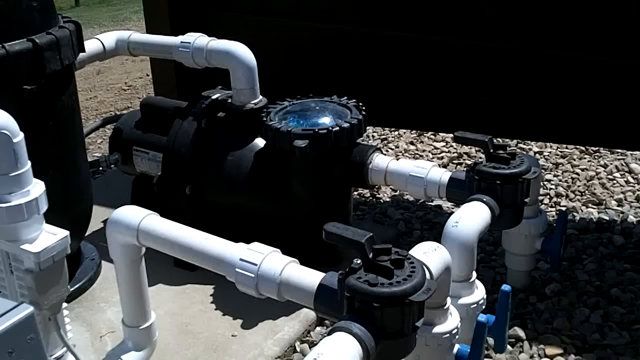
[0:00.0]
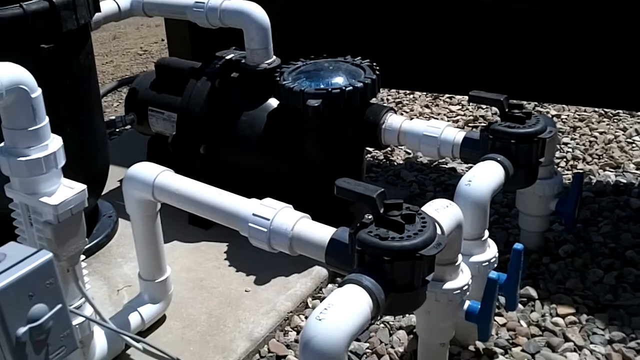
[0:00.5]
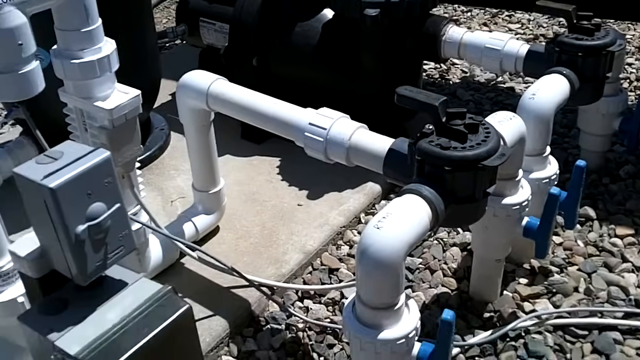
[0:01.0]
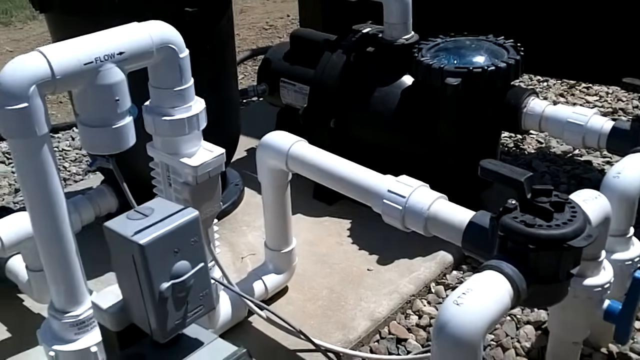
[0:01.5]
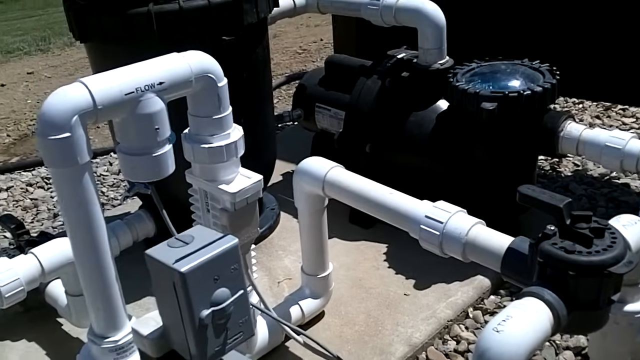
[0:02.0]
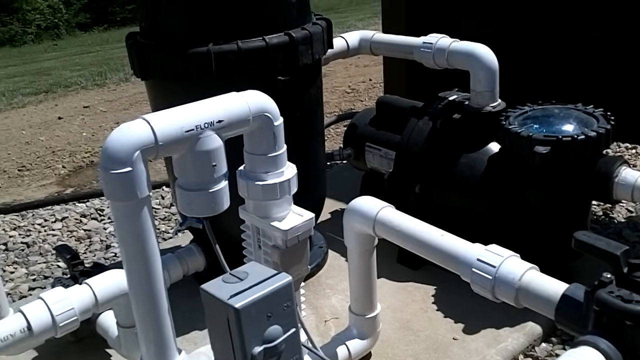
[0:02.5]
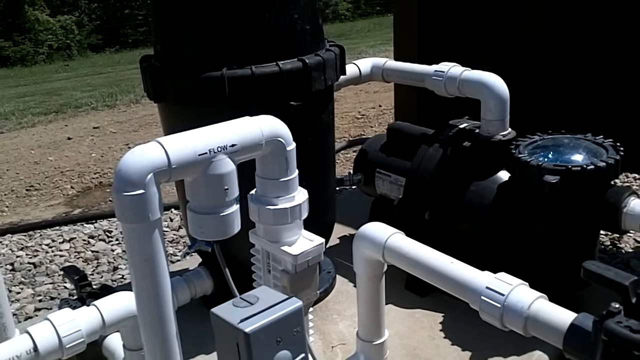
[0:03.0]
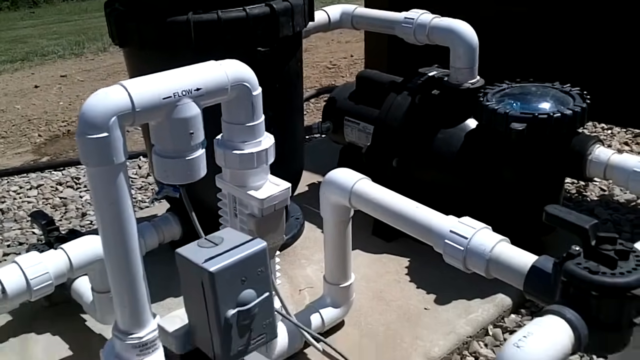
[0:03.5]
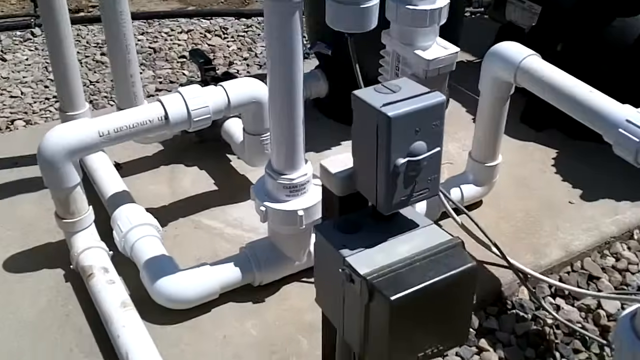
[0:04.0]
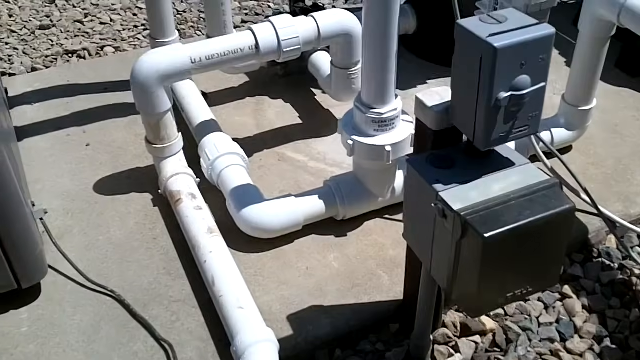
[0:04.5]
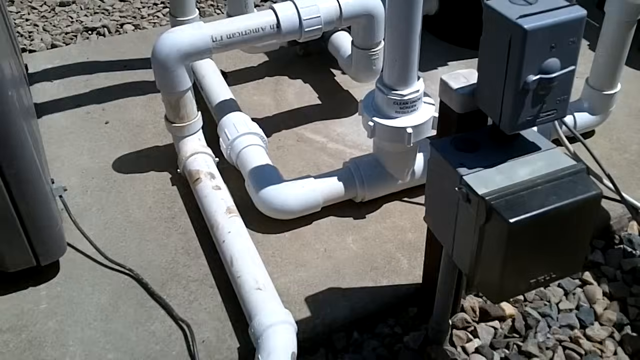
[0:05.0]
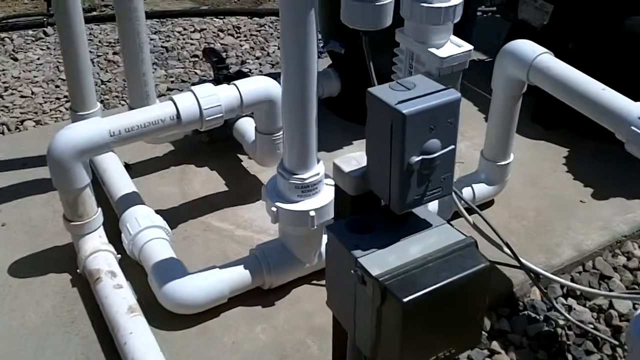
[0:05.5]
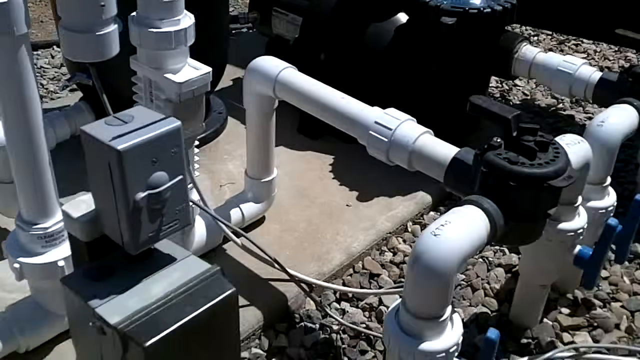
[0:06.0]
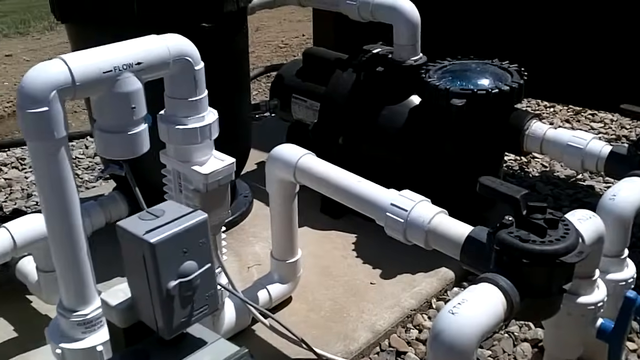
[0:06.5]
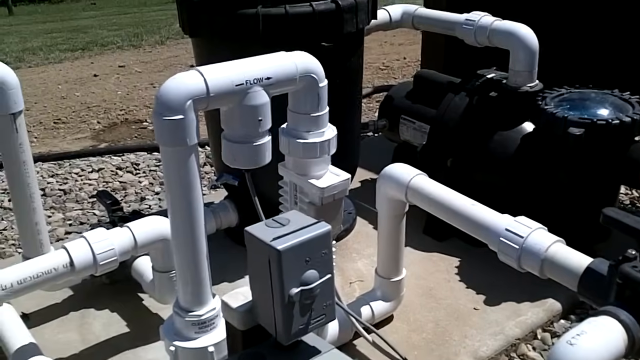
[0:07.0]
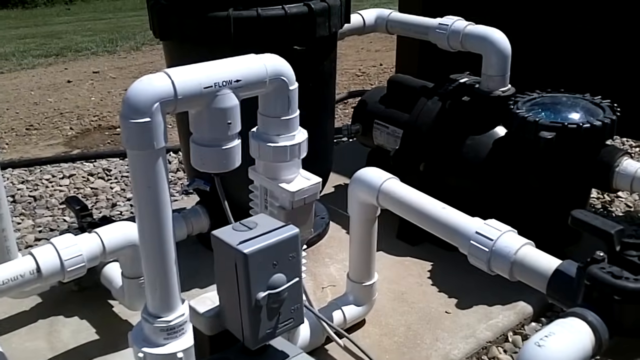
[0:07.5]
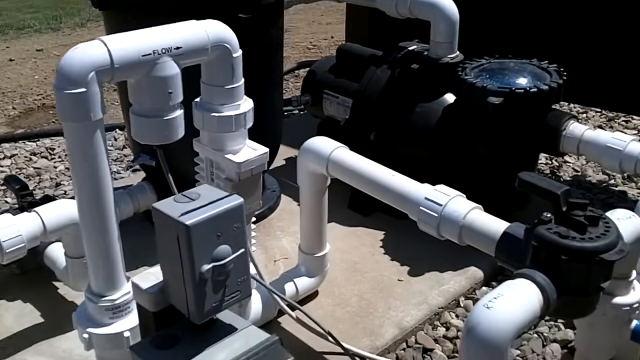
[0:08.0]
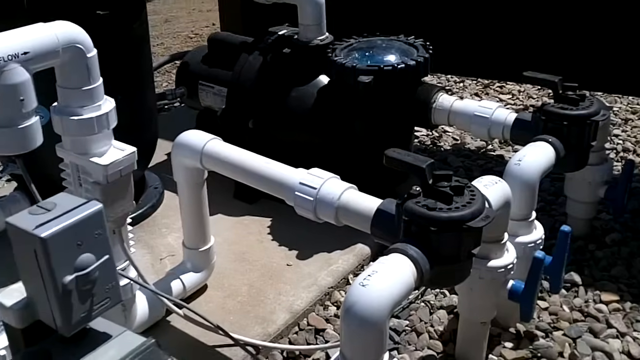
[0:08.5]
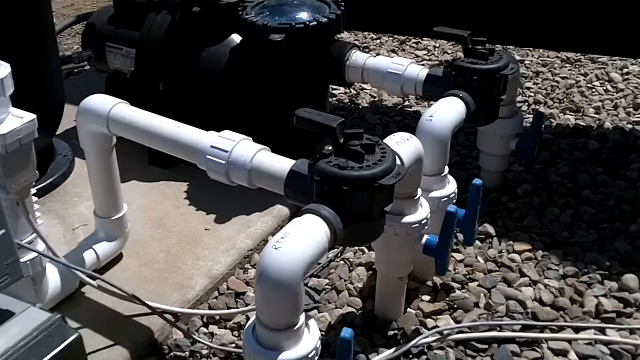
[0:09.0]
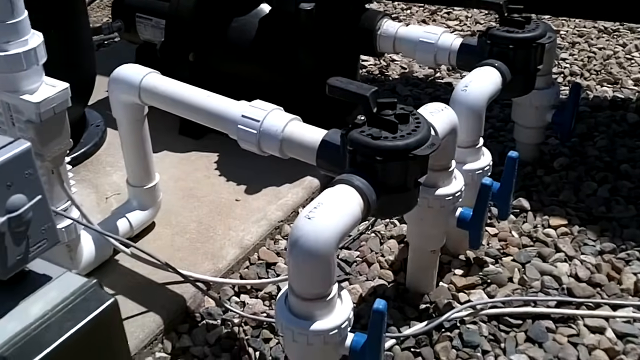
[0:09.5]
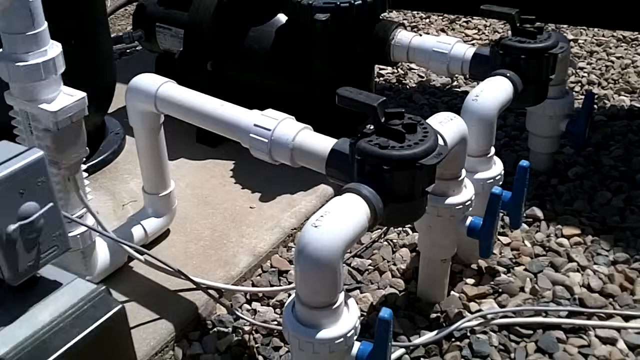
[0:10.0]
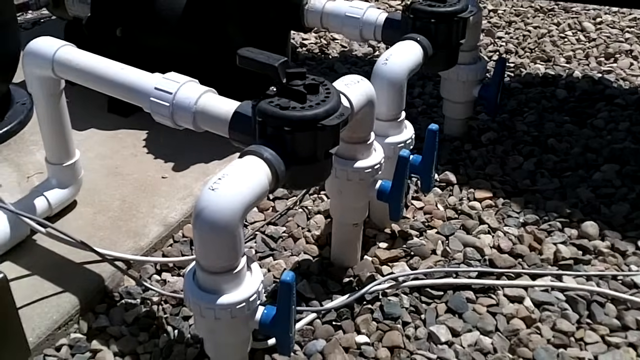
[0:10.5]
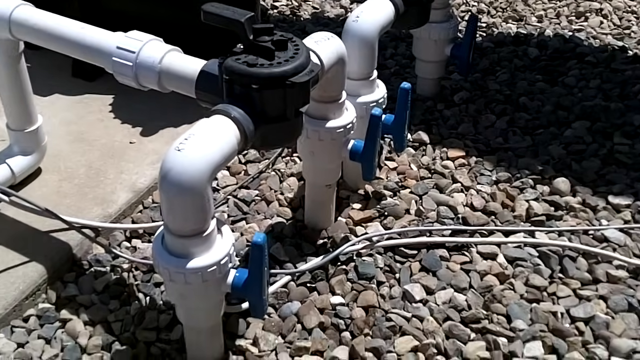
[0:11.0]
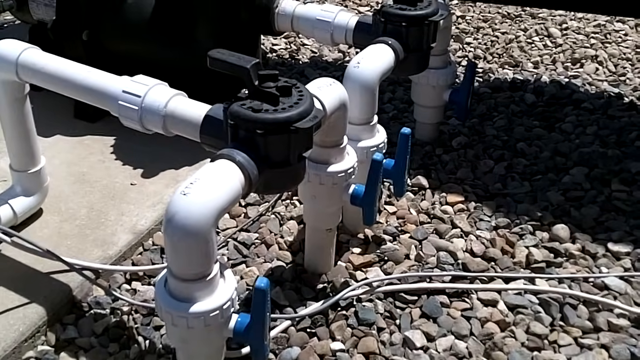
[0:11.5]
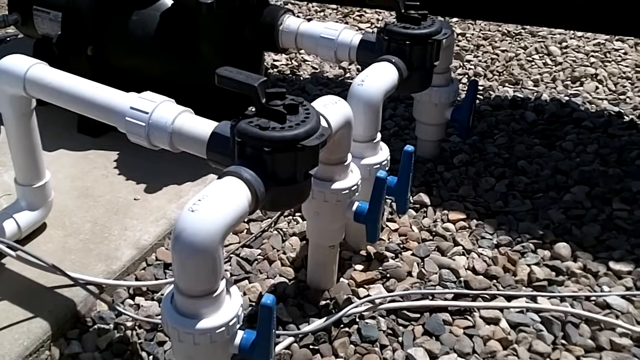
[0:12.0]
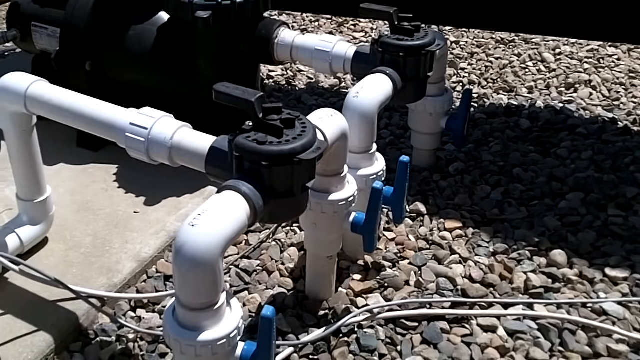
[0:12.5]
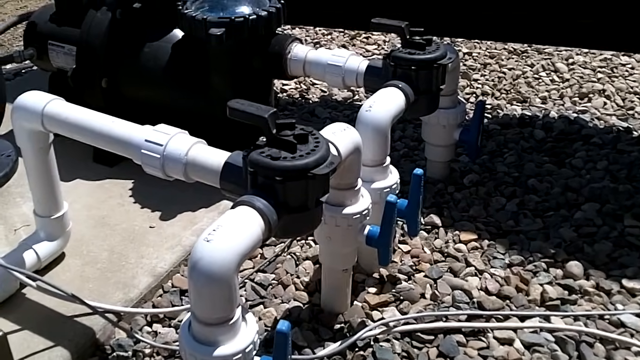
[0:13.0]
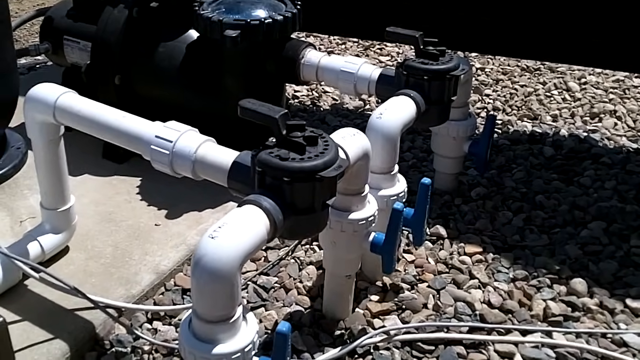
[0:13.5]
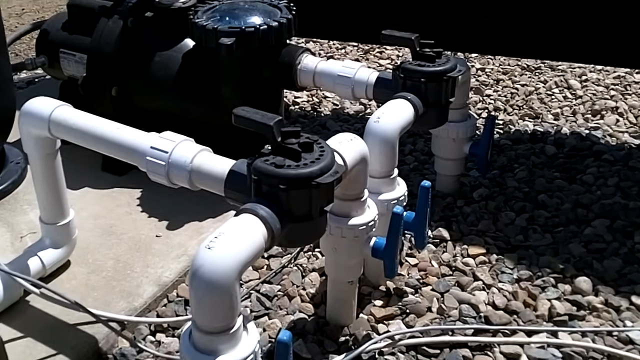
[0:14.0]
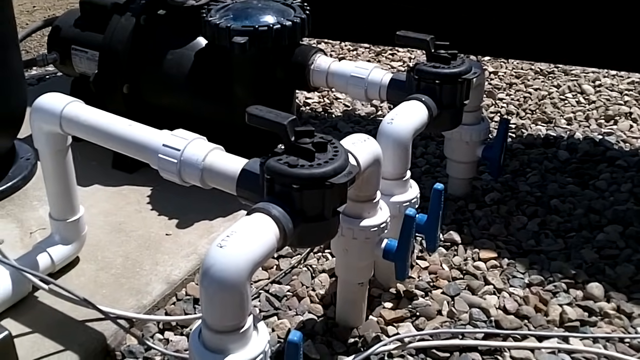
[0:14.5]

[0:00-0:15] Tubing for some sort of outdoor mechanism appears, maybe pool equipment. There are a lot of rocks on the ground and the apparatus for the machine: a lot of white tubing with black connectors, and some cables. It is daylight, and the daylight shows on the rocks. Grass and dirt are in the background, and some cabling runs along the ground. Part of the apparatus is on gray cement. The equipment looks like something seen on a property that has a pool, so it is apparently some sort of pool equipment. One of the black connectors has a lever, and there is a box that can be opened, presumably to set some sort of timer.